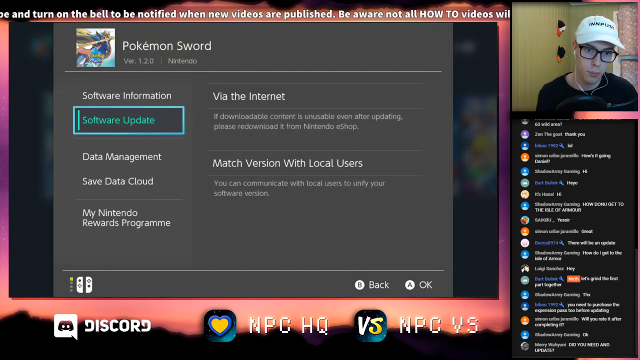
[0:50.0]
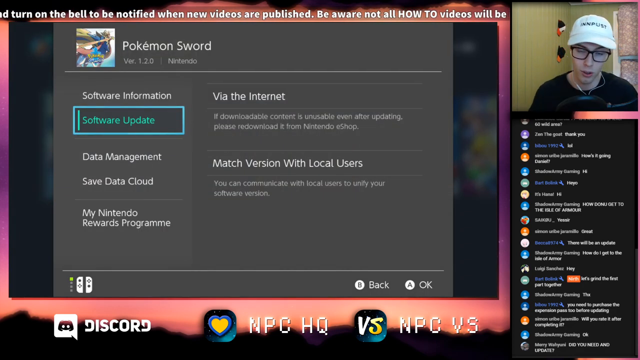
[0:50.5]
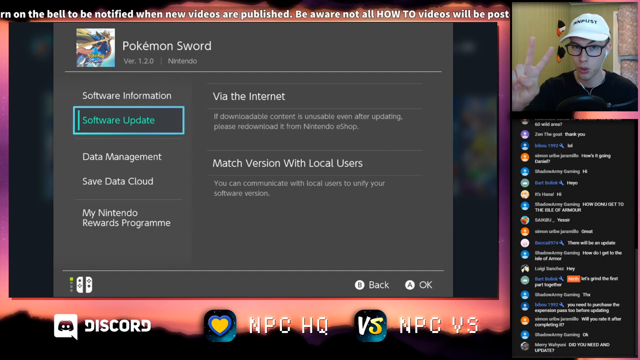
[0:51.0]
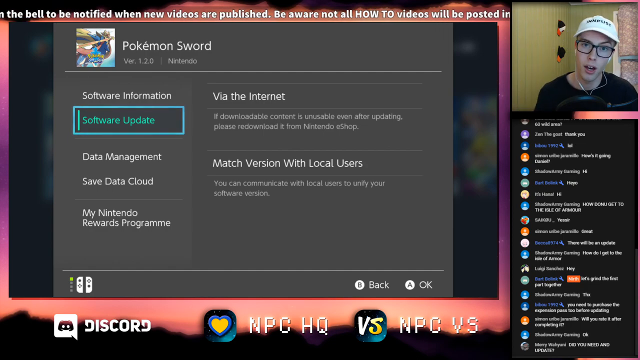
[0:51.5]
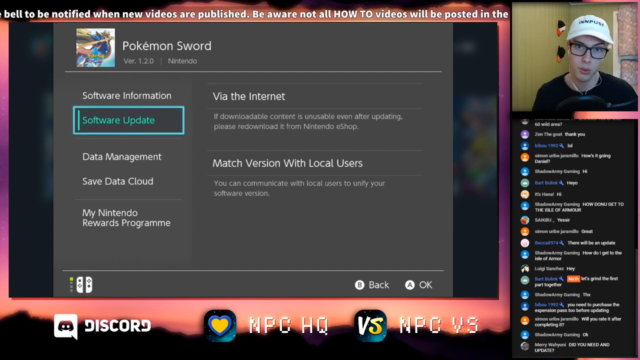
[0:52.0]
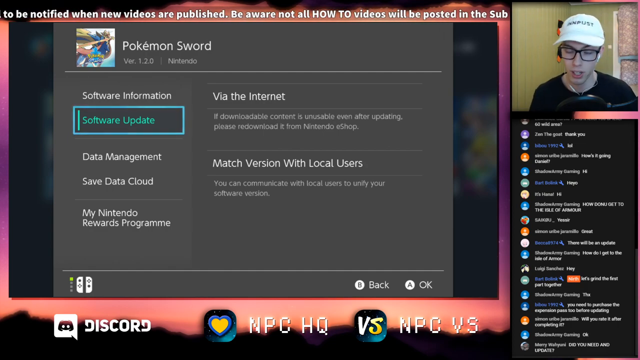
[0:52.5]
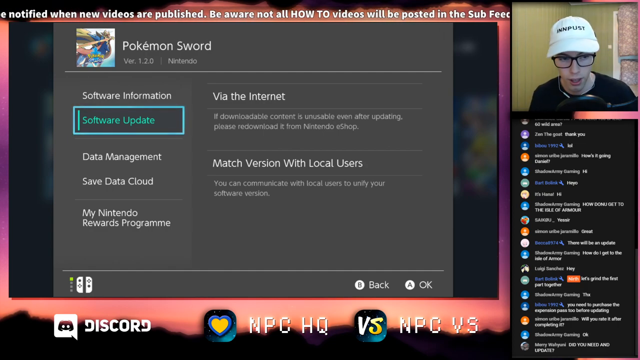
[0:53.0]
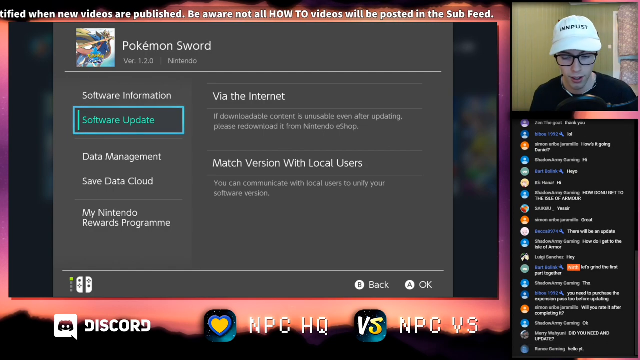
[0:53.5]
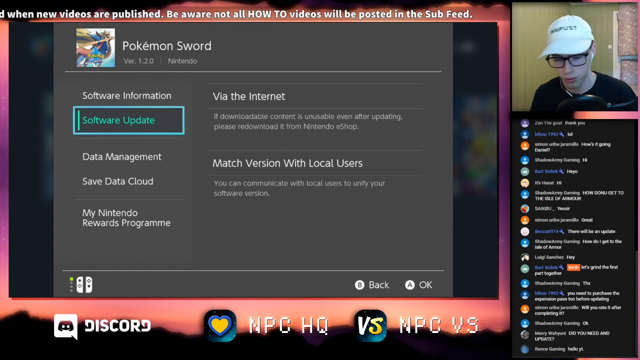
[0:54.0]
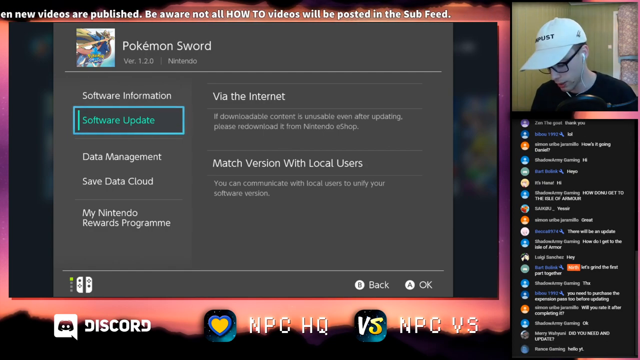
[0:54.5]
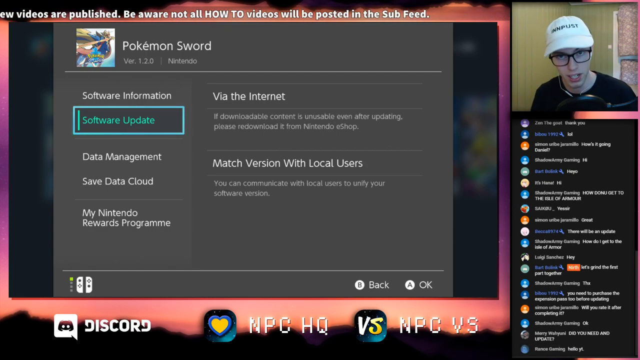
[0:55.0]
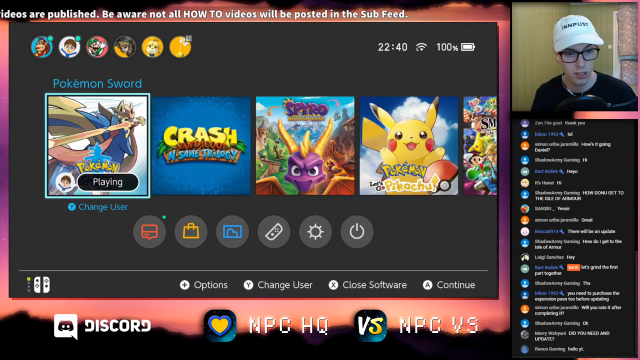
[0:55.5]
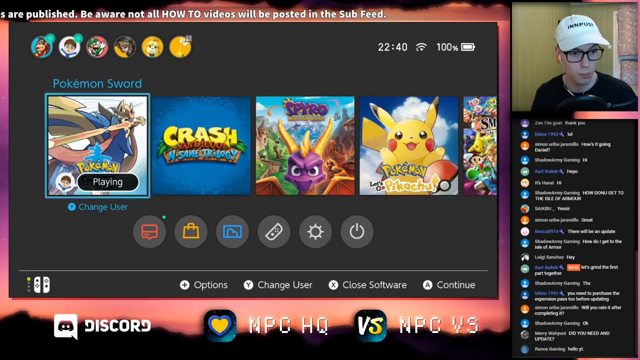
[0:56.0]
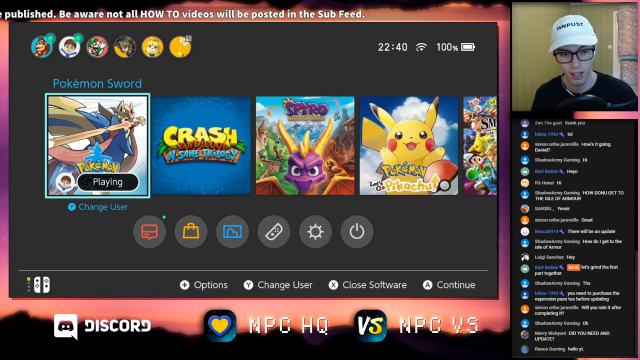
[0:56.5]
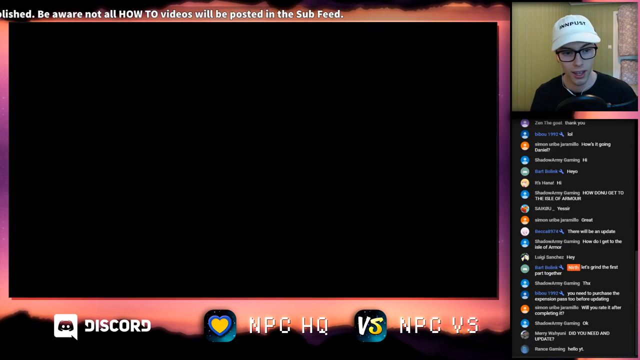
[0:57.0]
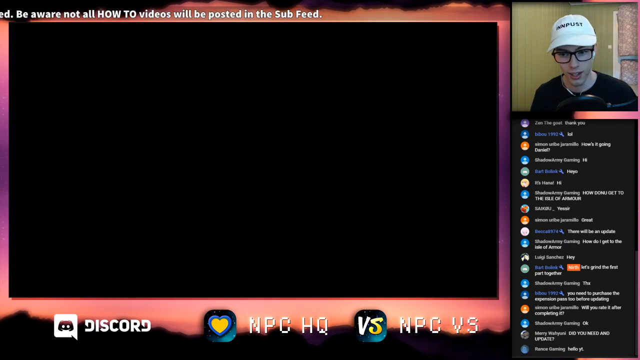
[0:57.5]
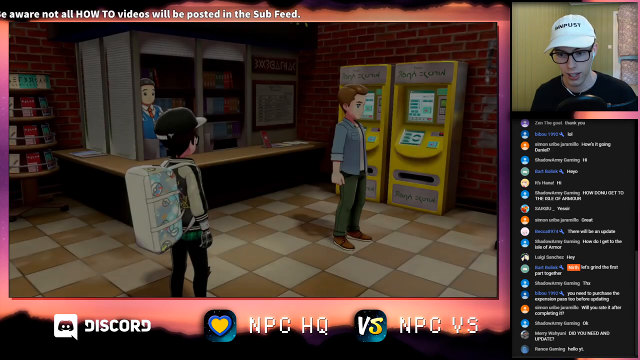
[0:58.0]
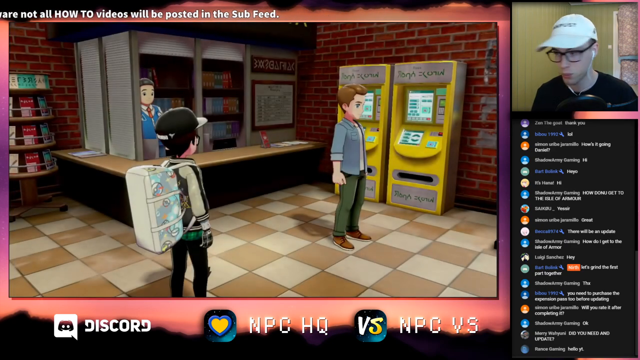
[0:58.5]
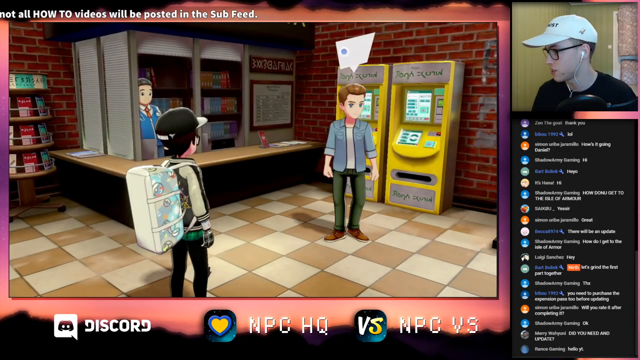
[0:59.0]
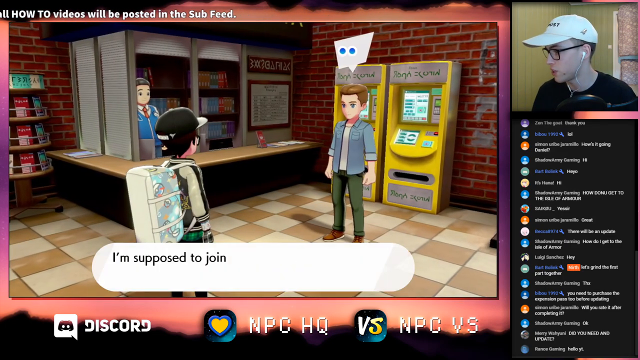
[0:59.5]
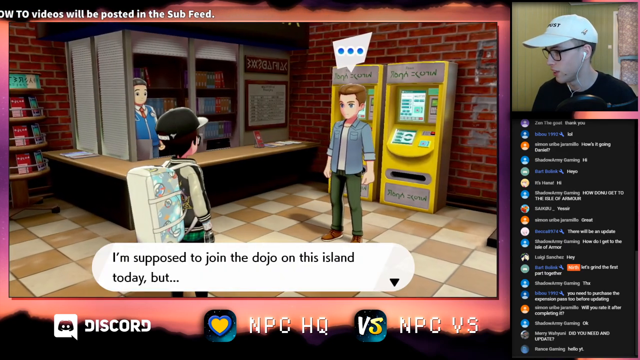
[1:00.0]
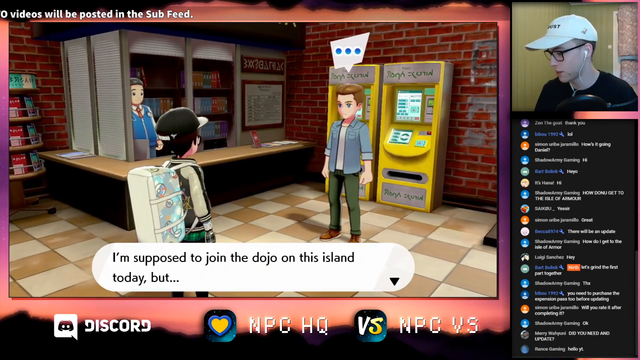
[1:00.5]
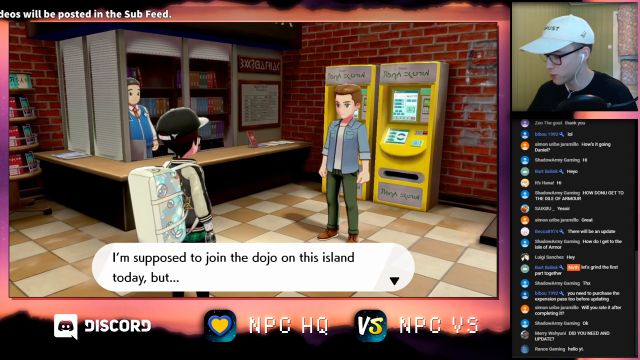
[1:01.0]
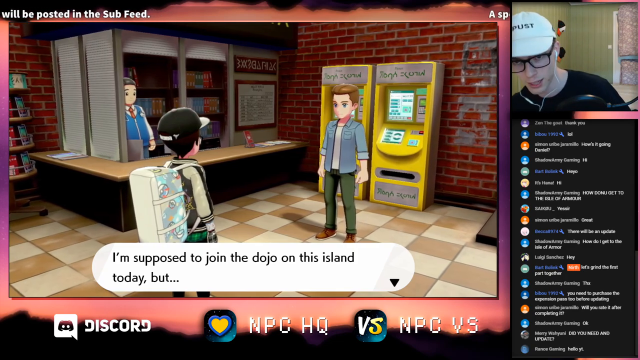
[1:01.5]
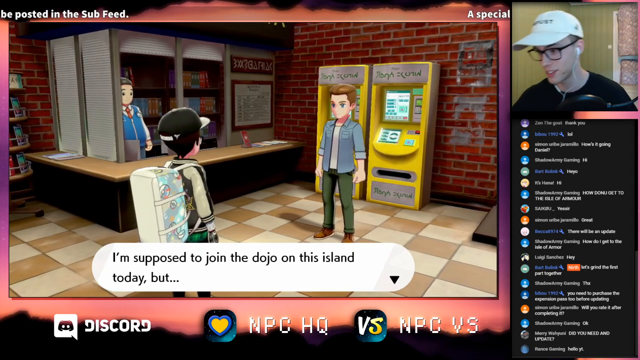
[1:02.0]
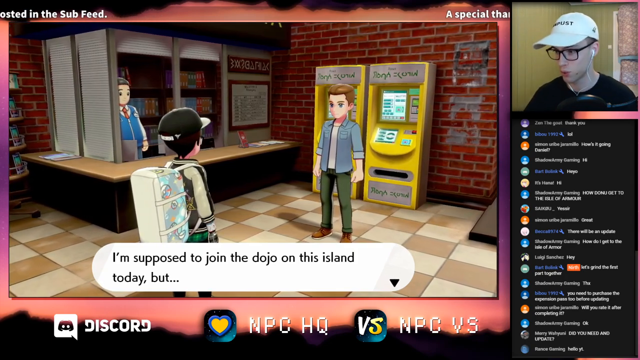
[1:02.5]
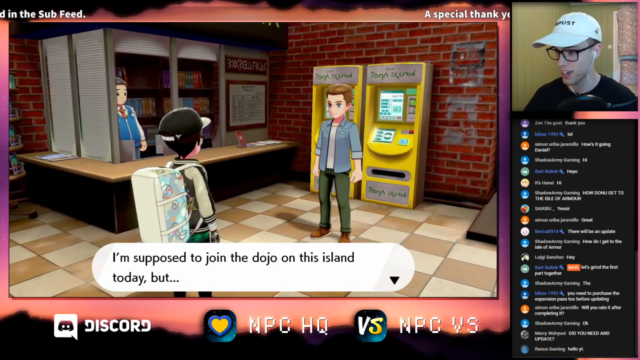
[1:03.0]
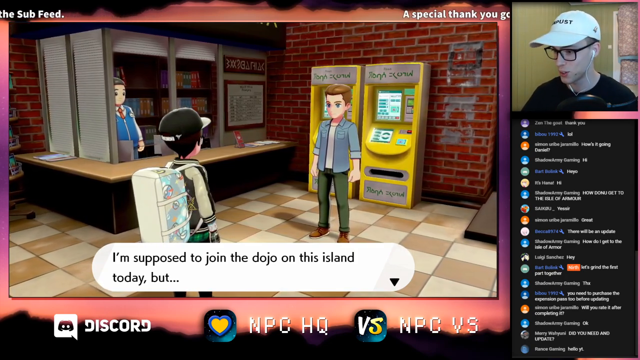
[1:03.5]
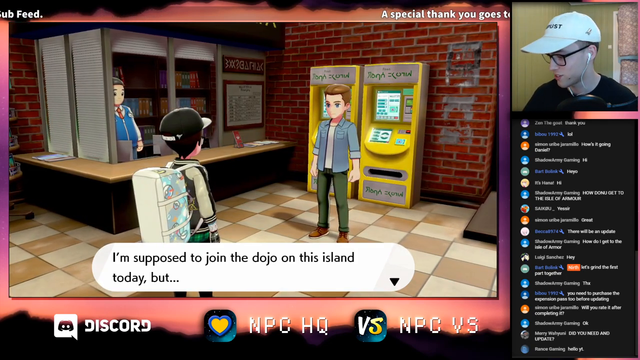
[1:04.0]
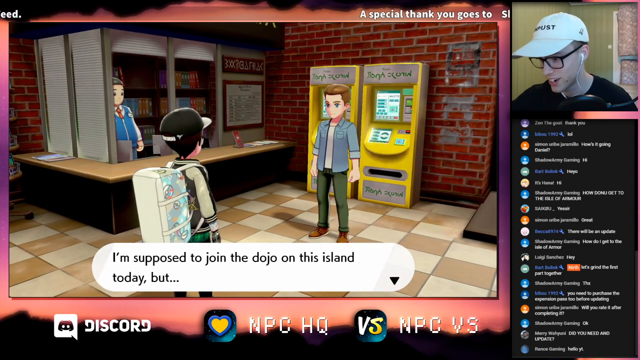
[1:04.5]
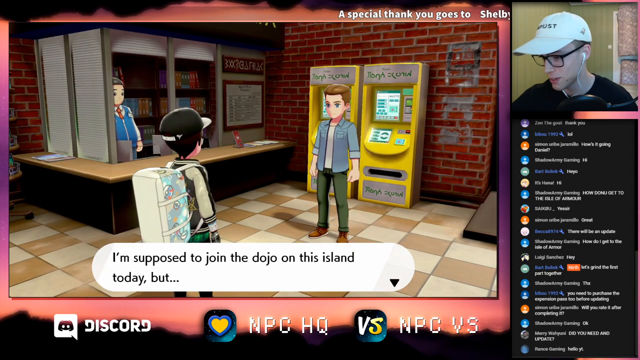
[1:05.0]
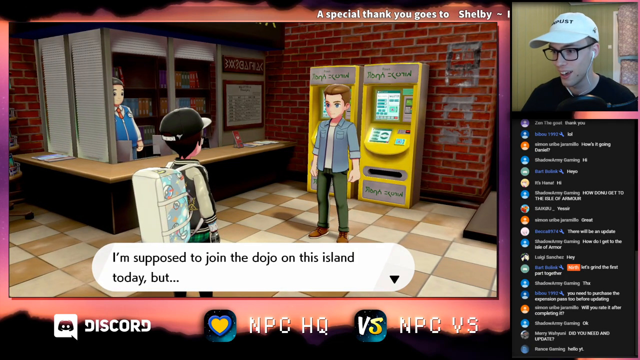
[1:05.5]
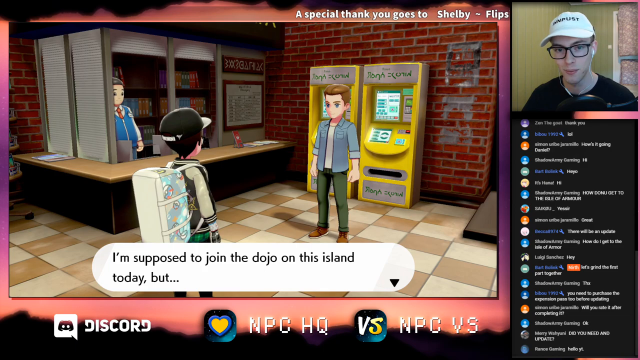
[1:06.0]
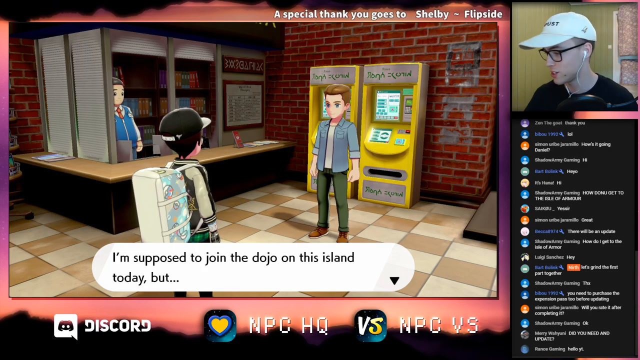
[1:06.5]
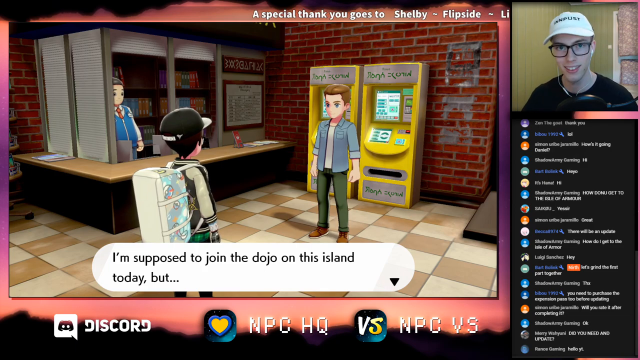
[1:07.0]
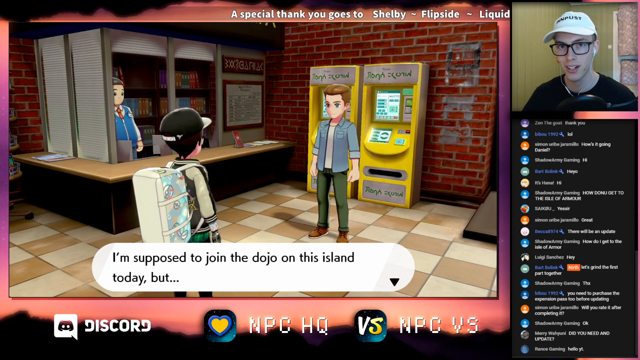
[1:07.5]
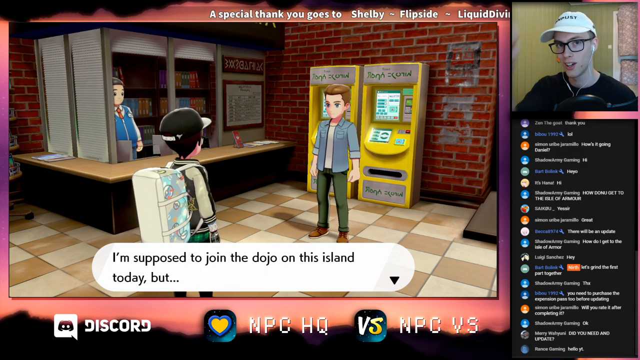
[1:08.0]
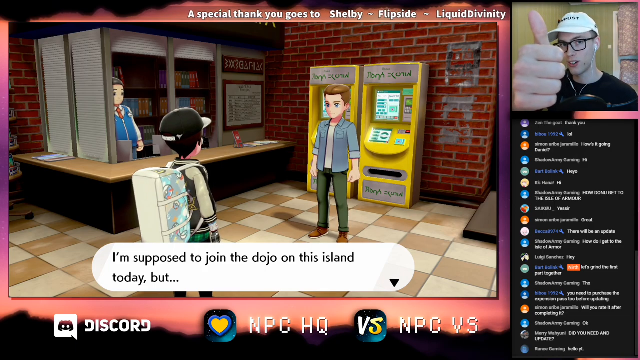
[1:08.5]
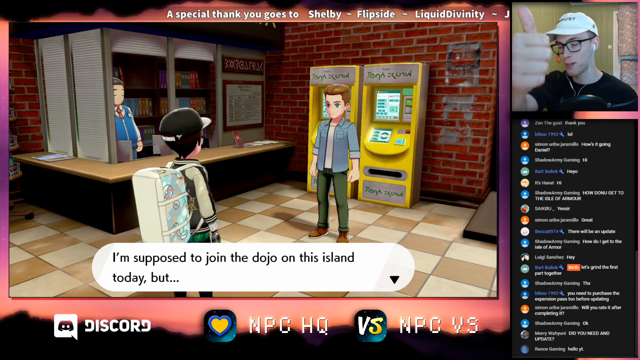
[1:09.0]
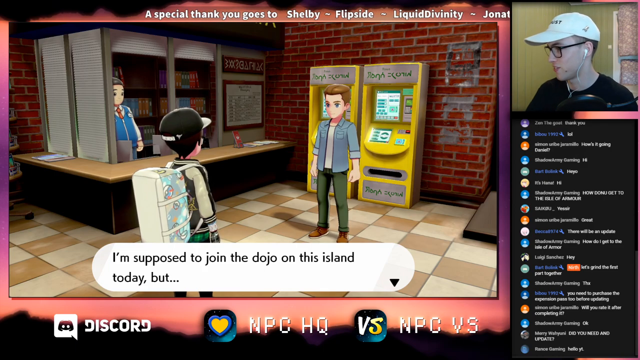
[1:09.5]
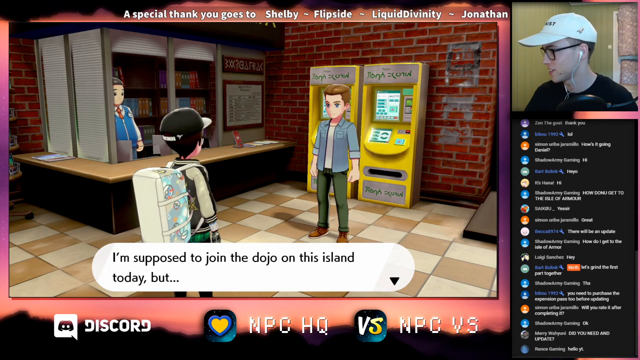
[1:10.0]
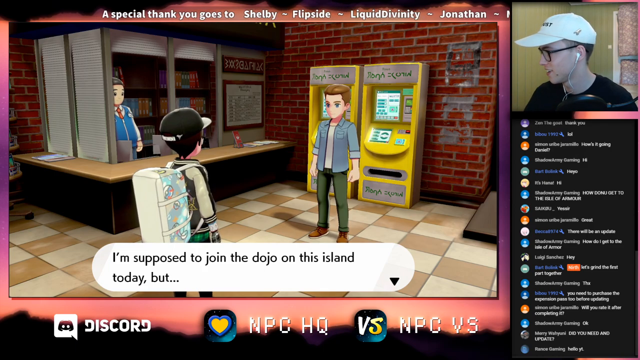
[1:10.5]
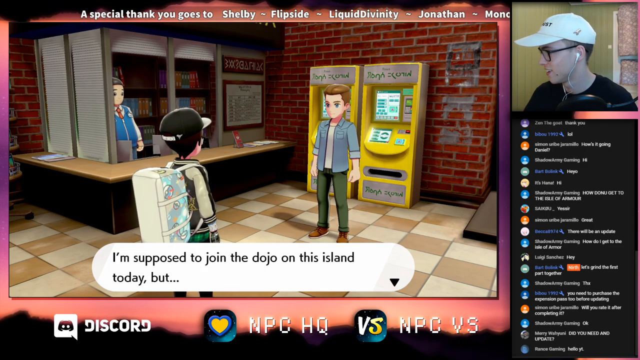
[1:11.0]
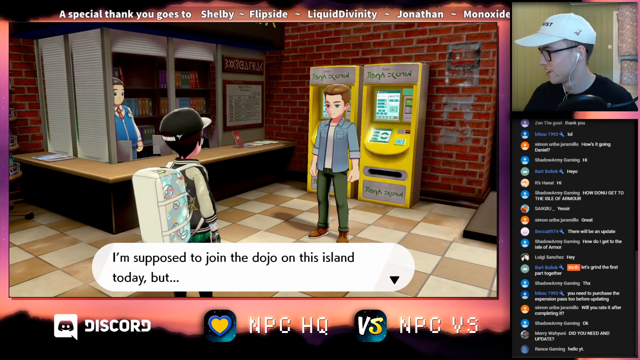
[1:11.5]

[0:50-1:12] The software update suggestion is on screen. The menu has multiple options, including software information, data management, save data cloud and my Nintendo rewards program. Software update is boxed in a flashing blue line. The video briefly cuts back to the menu screen and then apparently goes back into the Pokemon game. Two people stand there: one wears a baseball cap and a large backpack, and the other has short brown hair and a denim shirt. One says "I'm supposed to join the dojo on this island today but..." The video pauses on this screen for some time. The man in the top right-hand corner gives a thumbs up to the camera and looks away to the right; he is wearing a pair of wired white earbuds. Across the top of the screen a scrolling message reads "a special thank you goes to", followed by a series of usernames listed individually.